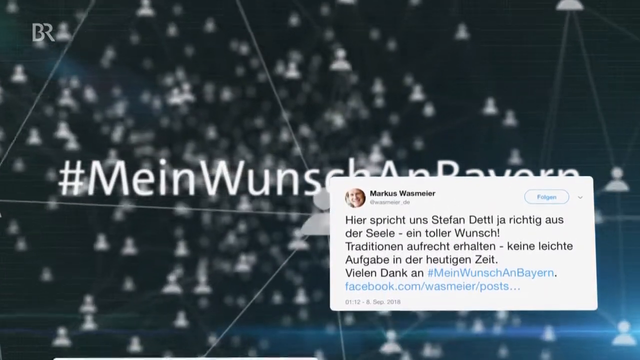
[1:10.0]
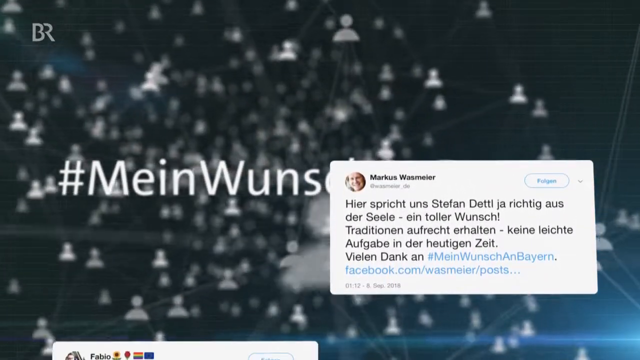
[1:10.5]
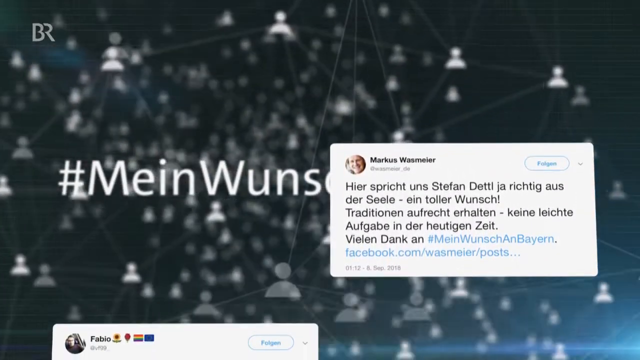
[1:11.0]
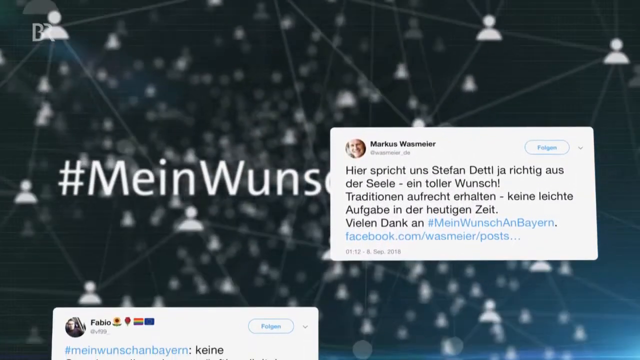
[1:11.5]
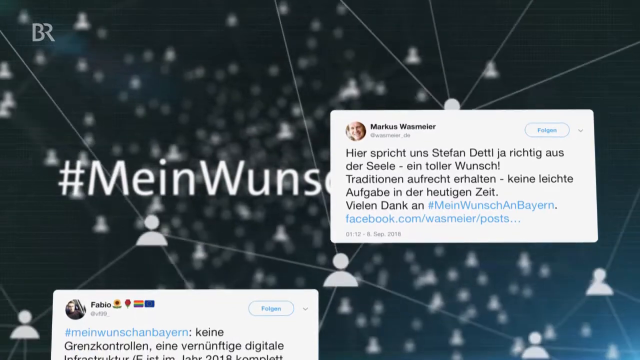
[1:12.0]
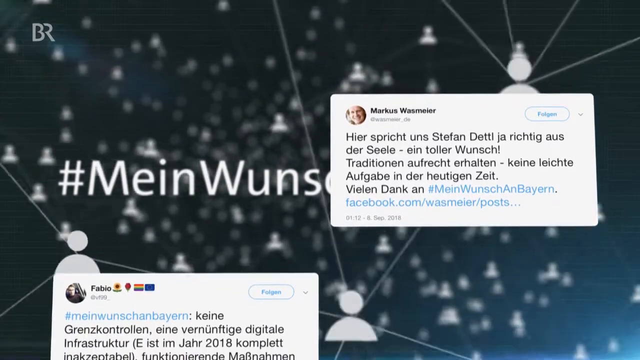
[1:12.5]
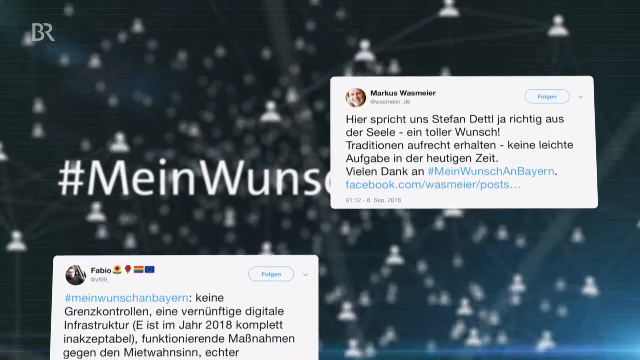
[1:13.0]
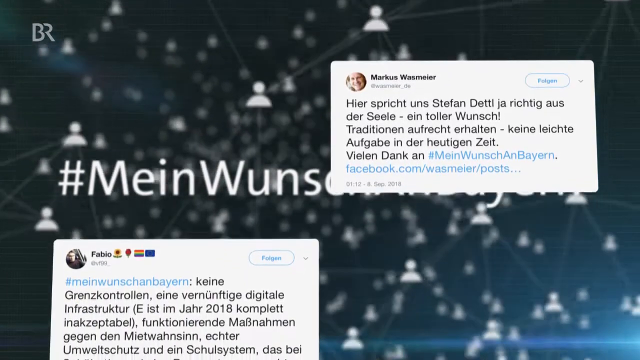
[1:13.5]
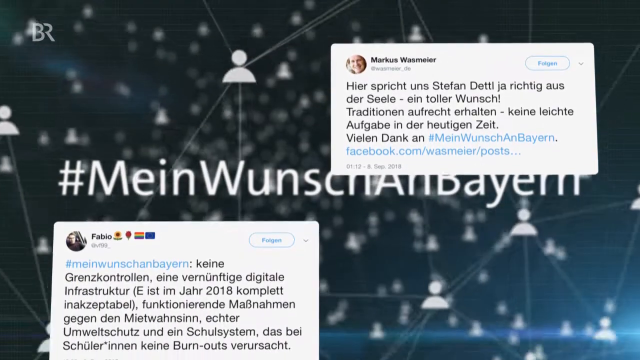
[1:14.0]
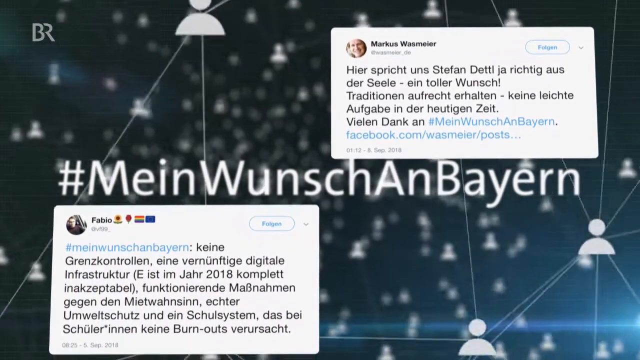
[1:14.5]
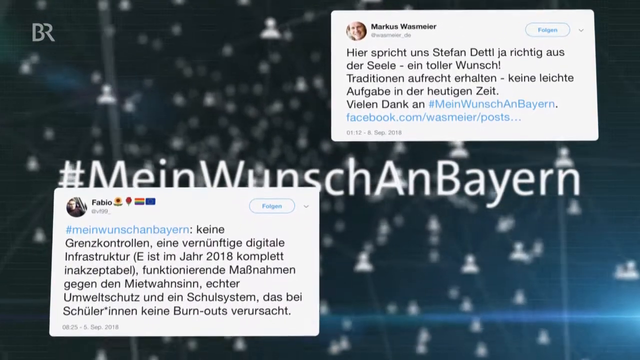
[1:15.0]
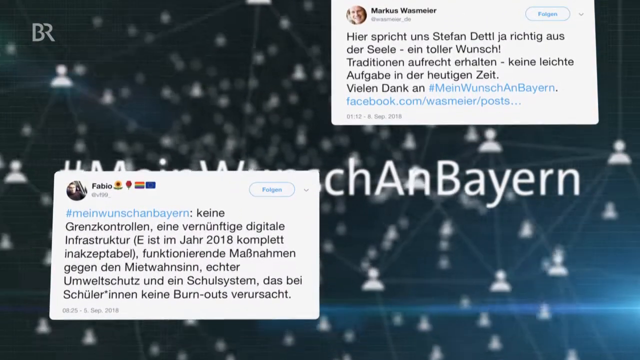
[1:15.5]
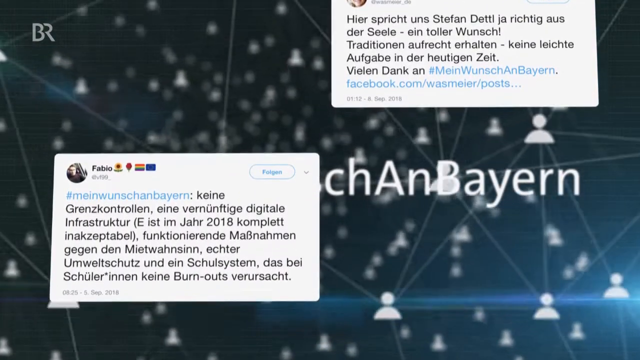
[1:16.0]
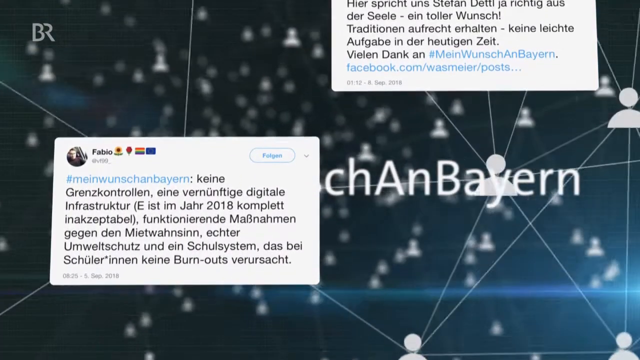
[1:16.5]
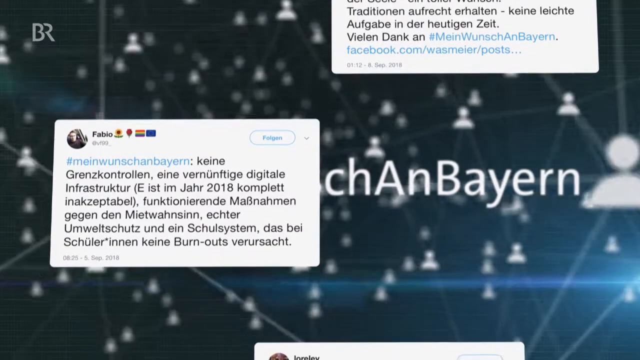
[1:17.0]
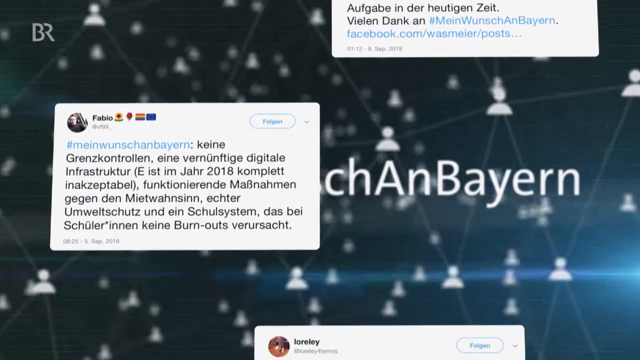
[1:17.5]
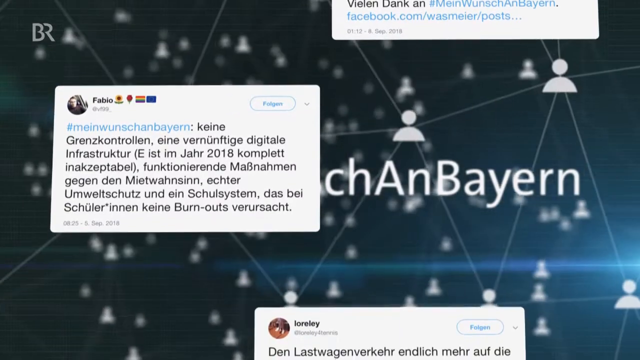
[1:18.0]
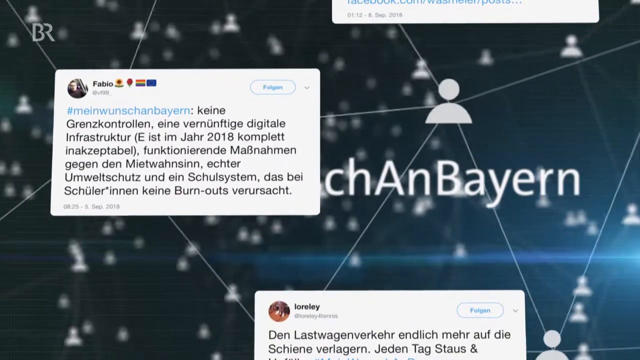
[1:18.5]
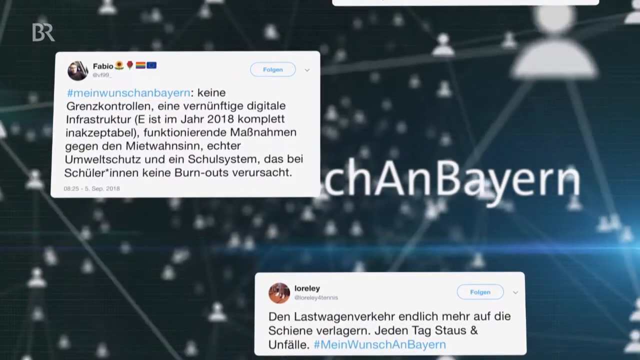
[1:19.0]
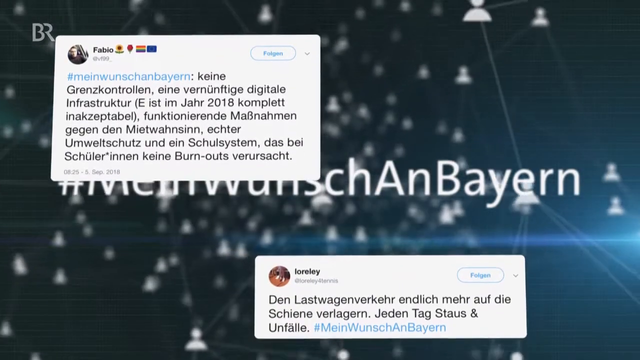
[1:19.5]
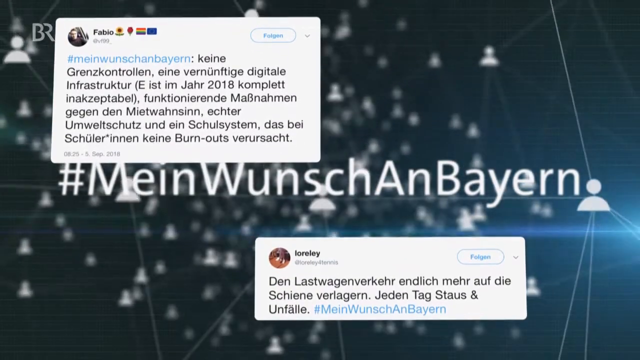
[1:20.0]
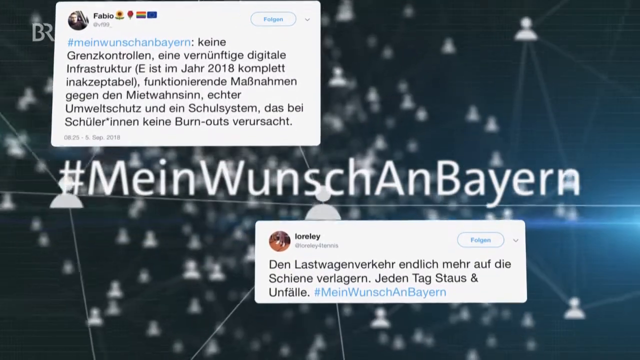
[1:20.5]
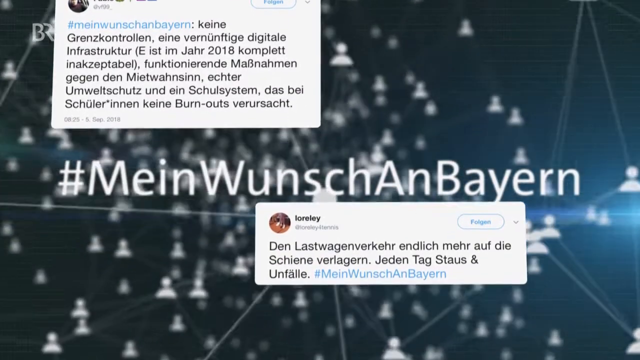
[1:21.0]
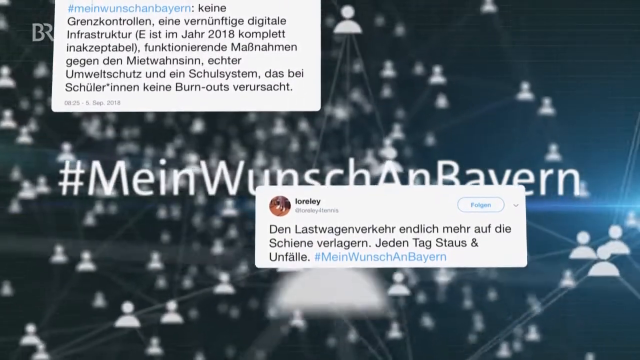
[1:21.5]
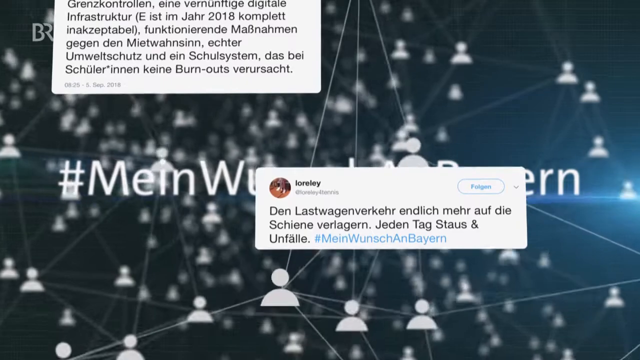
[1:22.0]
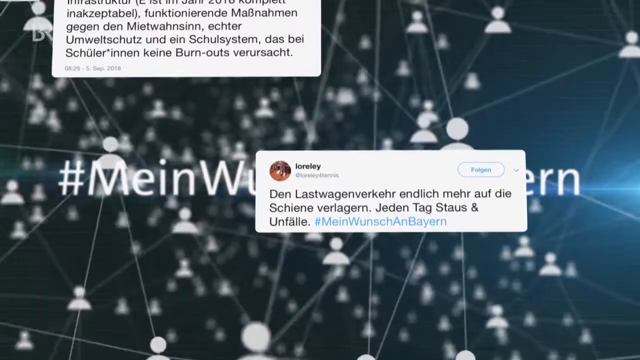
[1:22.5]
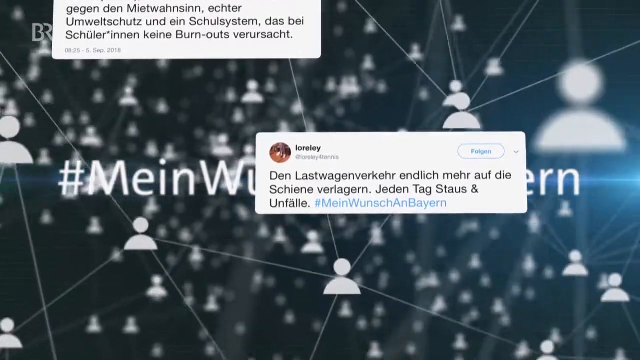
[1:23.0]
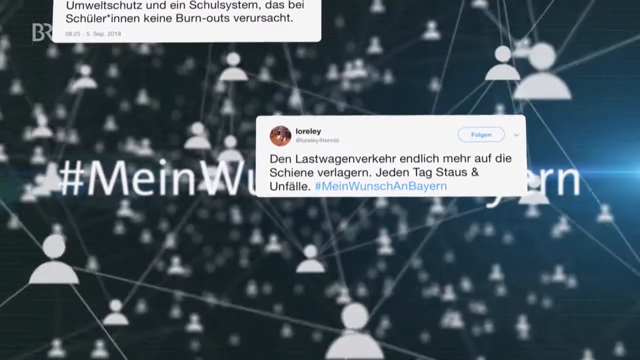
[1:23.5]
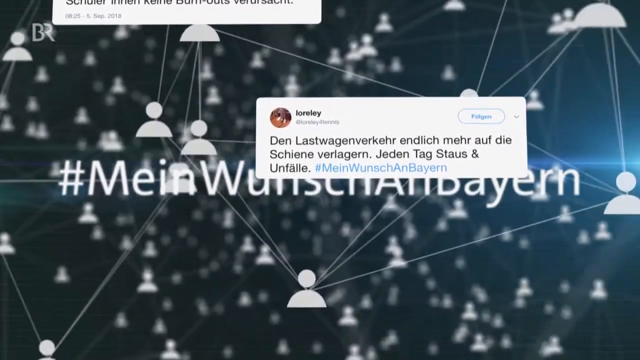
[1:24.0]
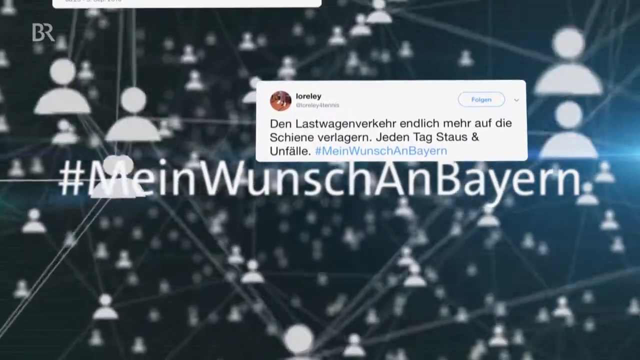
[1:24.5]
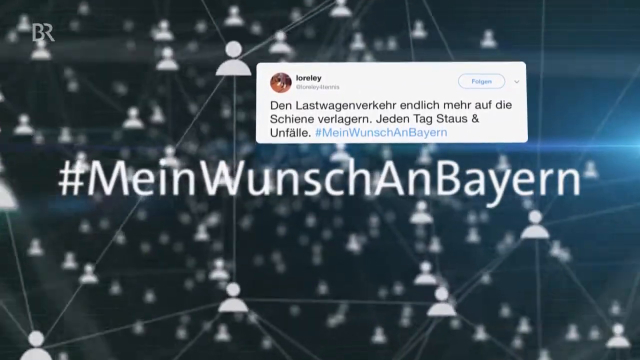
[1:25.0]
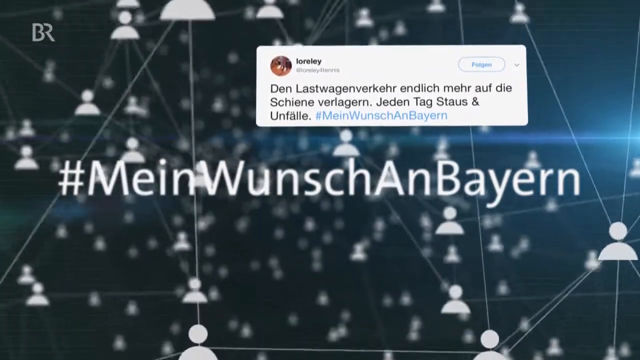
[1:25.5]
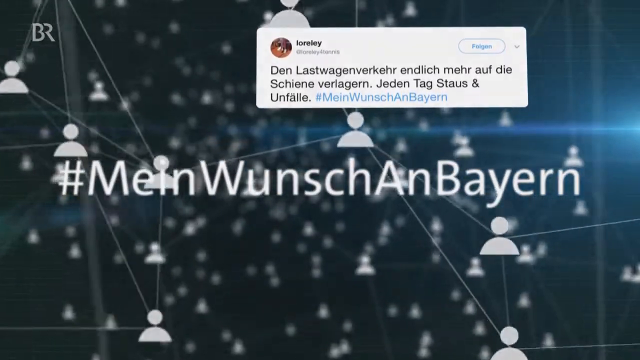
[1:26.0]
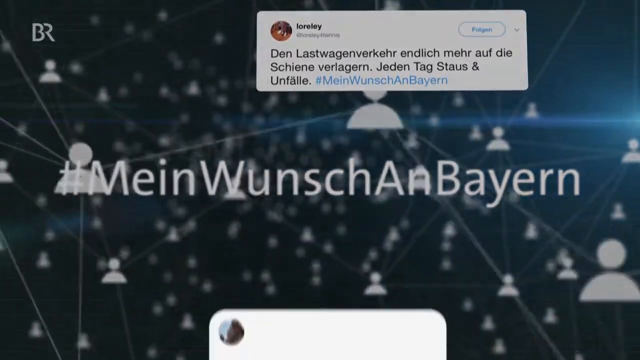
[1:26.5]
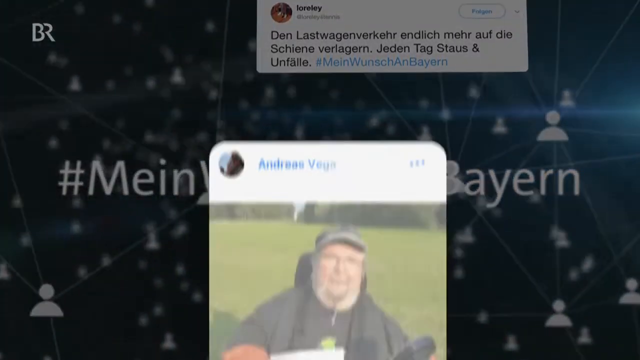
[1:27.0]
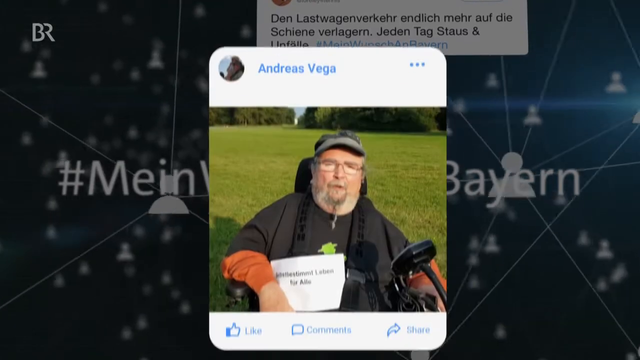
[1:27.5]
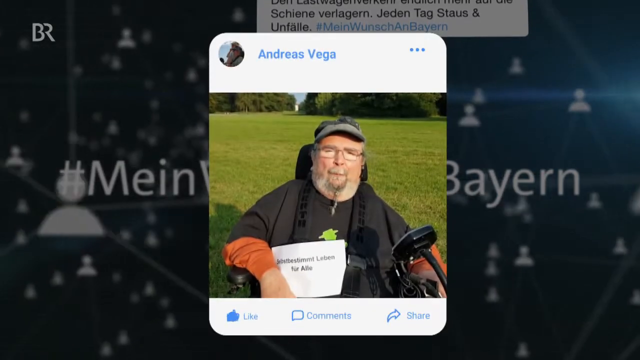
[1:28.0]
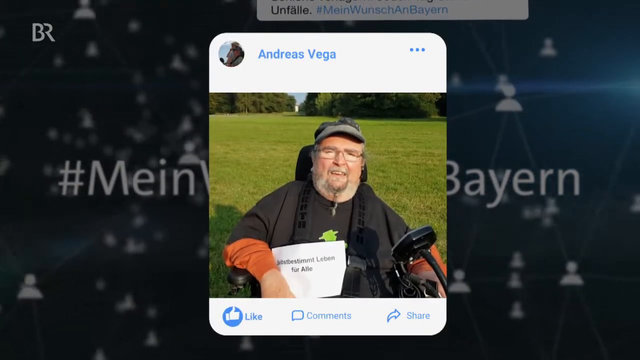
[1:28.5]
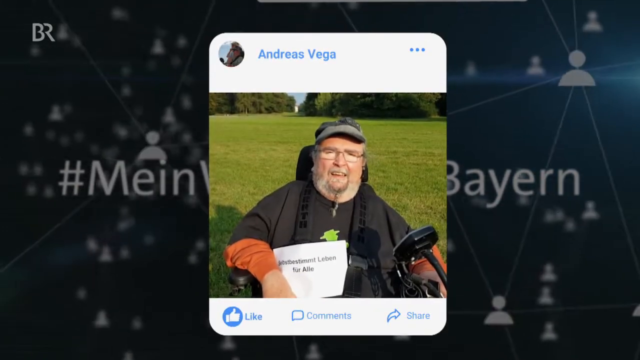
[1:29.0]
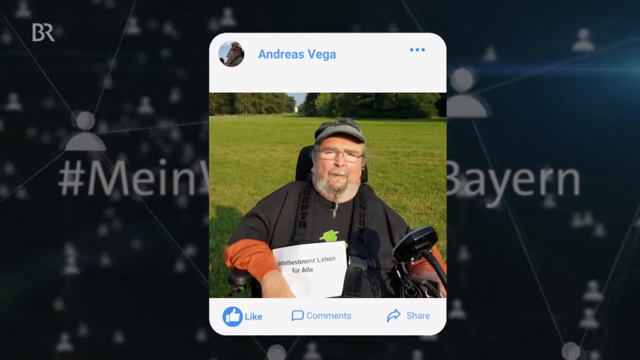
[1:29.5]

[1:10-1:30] The background shows symbols of people with lines drawn between them as though they have connections. A tweet appears about Stefan Detti, the man from the brass band. It reads "Hier spricht uns Stefan Detti ja richtig aus der Stil. Ein toller Wunsch. Traditionen aufrechterhalten keine leichte Aufgabe in der heutigen Zeit. Vielen Dank an #Mein Wunsch an Bayern", followed by "Facebook.com".